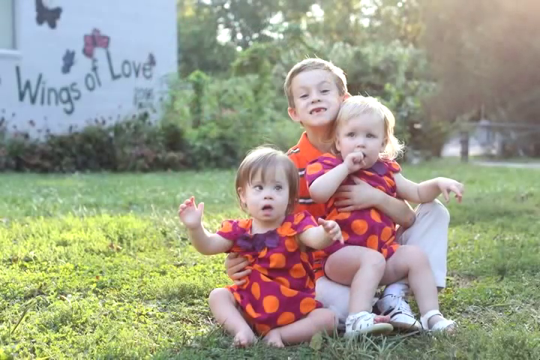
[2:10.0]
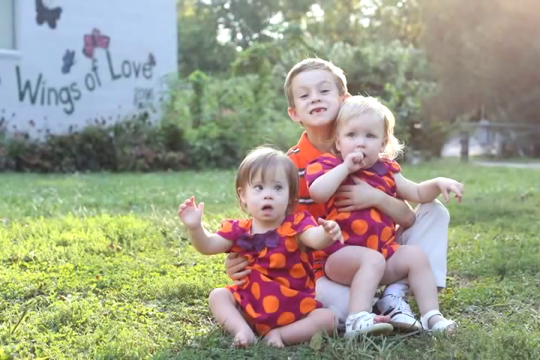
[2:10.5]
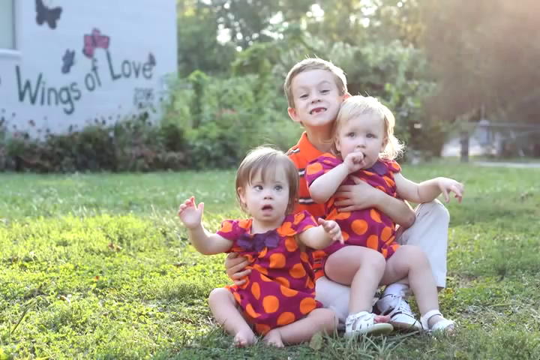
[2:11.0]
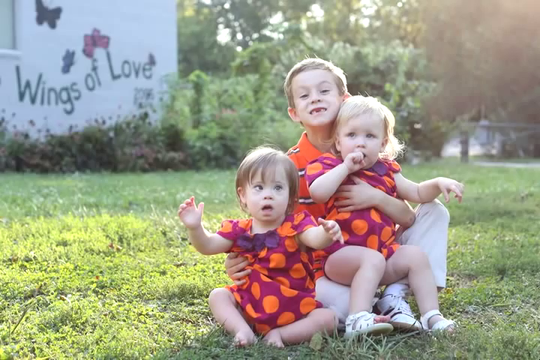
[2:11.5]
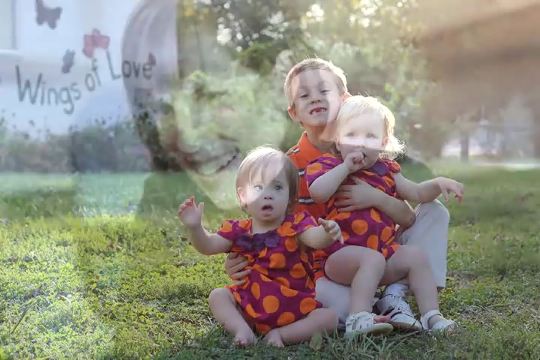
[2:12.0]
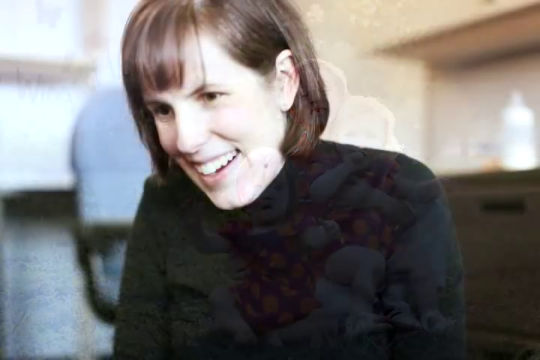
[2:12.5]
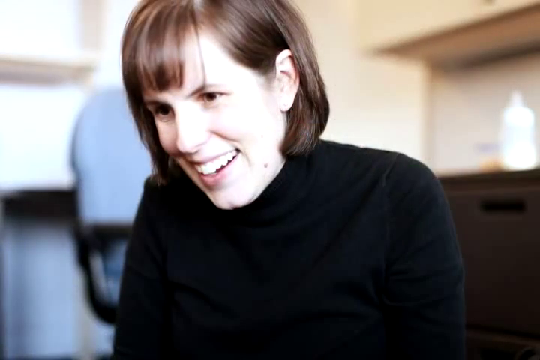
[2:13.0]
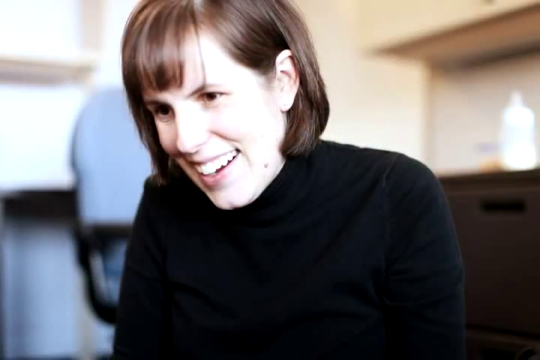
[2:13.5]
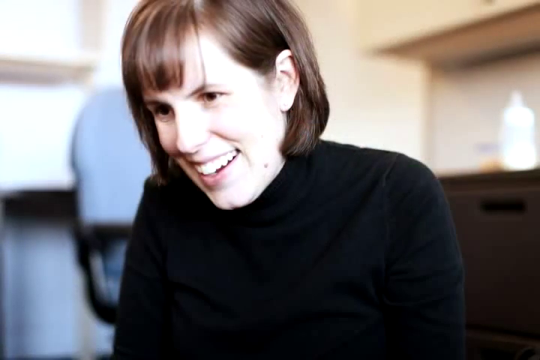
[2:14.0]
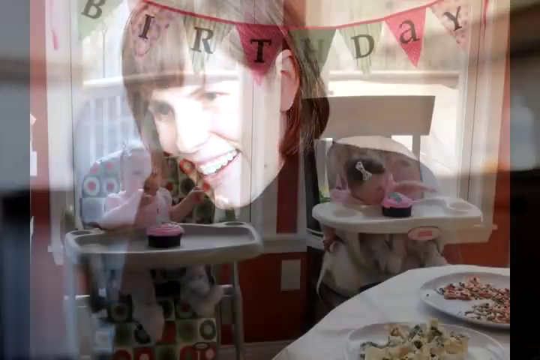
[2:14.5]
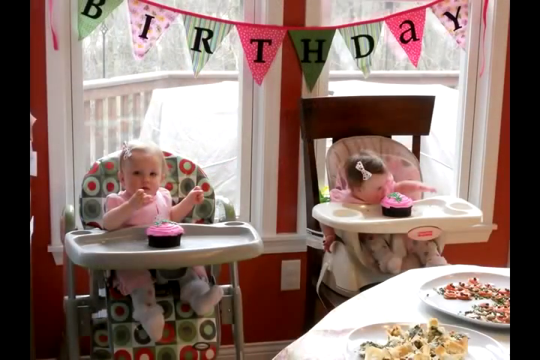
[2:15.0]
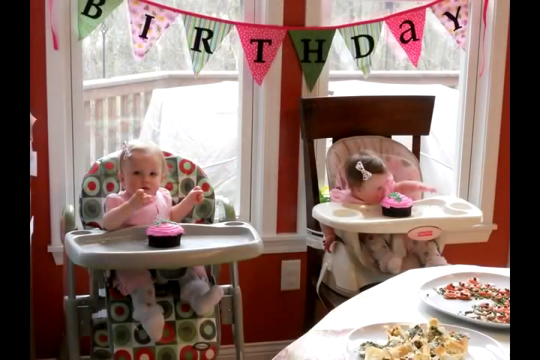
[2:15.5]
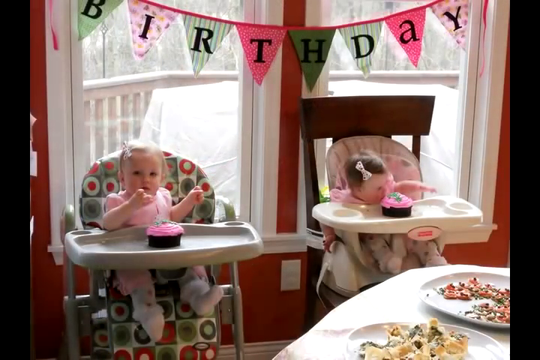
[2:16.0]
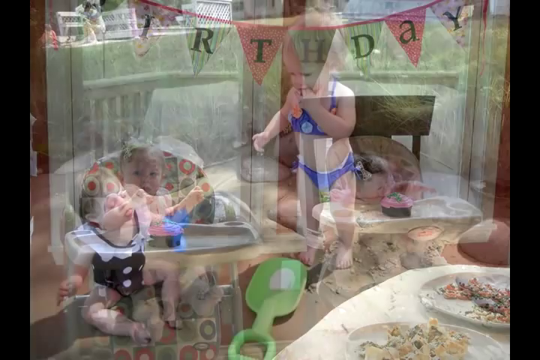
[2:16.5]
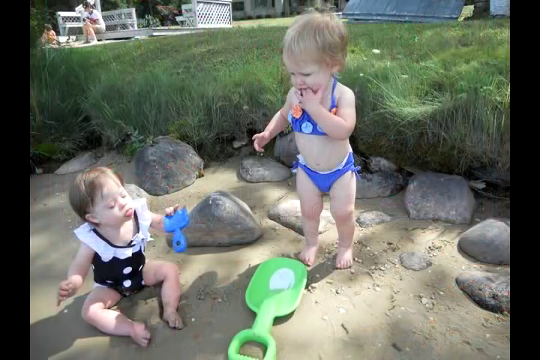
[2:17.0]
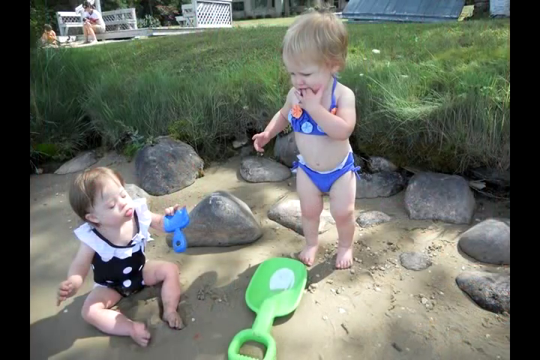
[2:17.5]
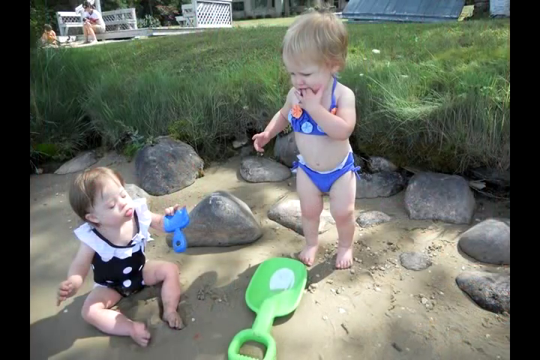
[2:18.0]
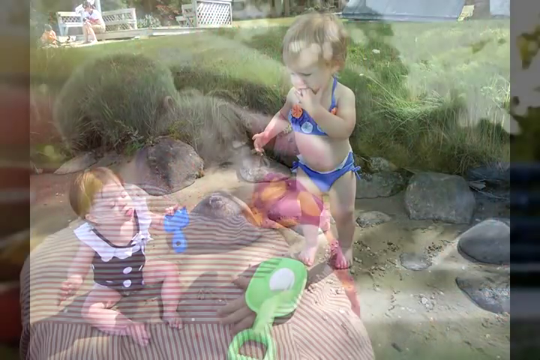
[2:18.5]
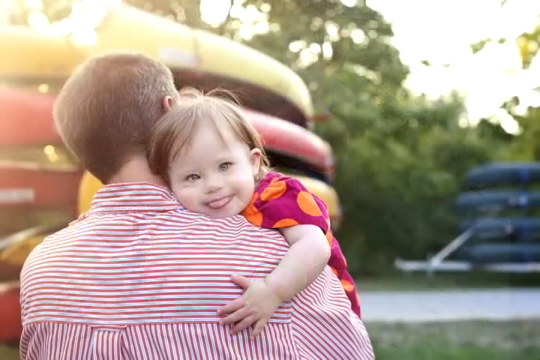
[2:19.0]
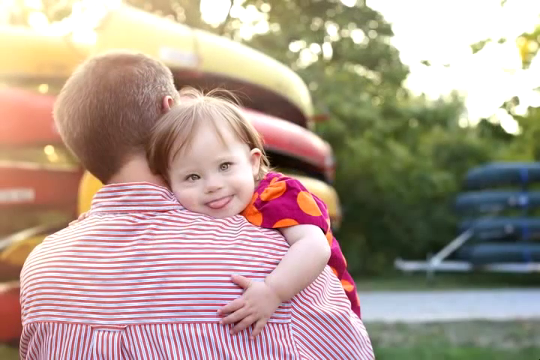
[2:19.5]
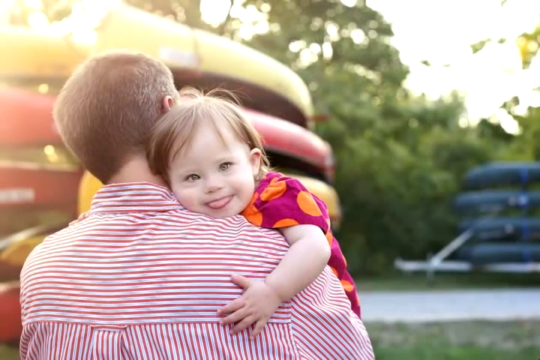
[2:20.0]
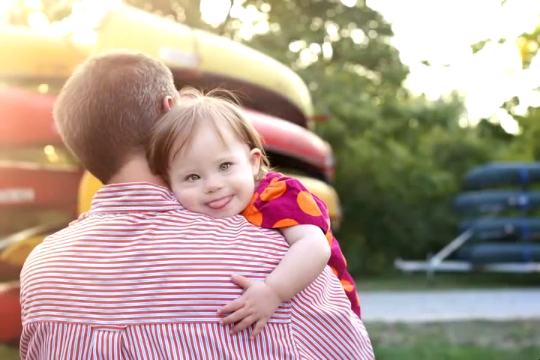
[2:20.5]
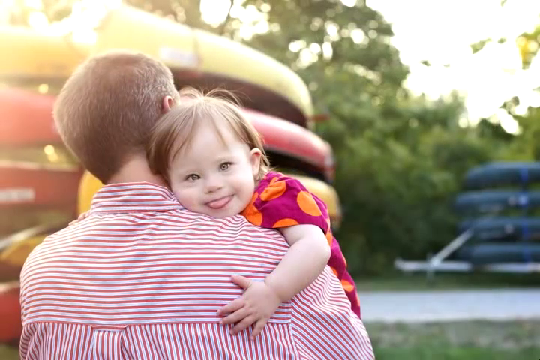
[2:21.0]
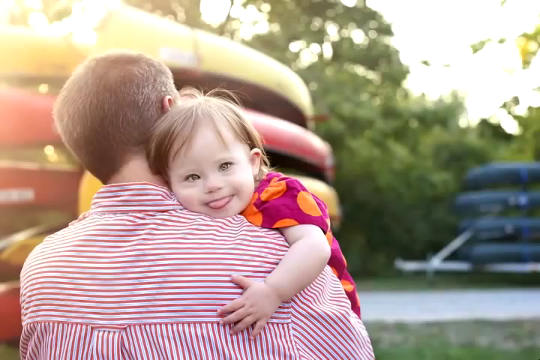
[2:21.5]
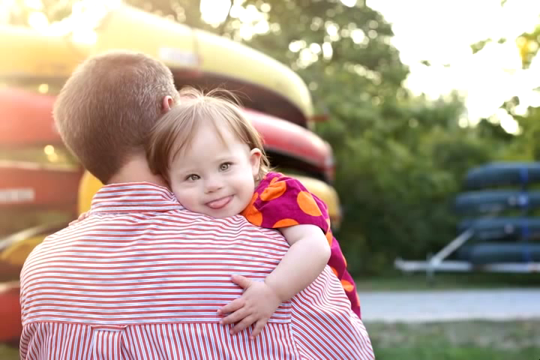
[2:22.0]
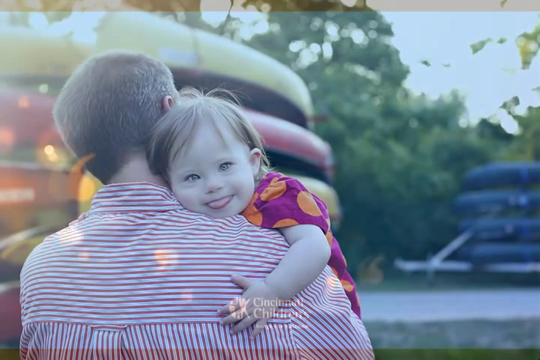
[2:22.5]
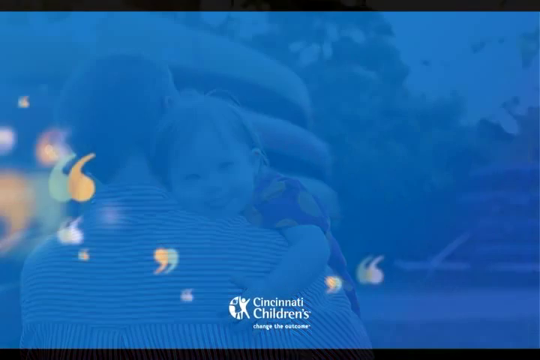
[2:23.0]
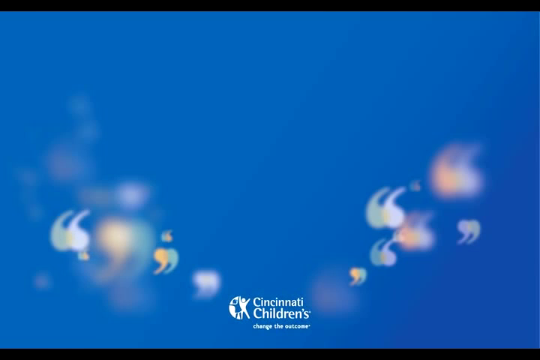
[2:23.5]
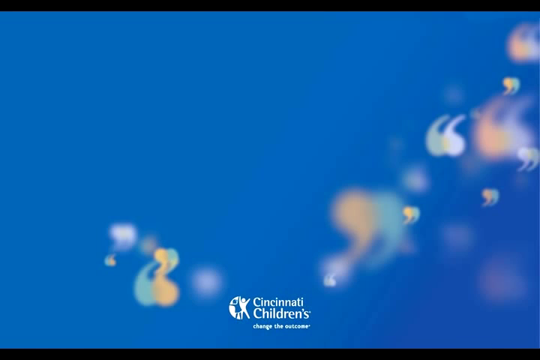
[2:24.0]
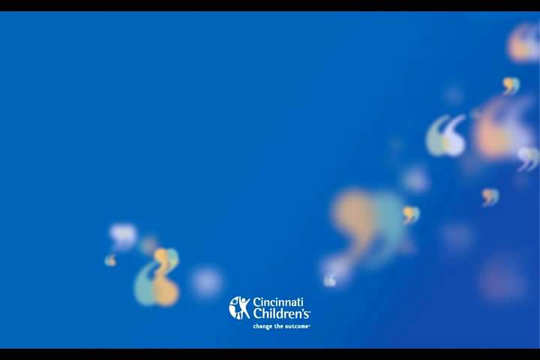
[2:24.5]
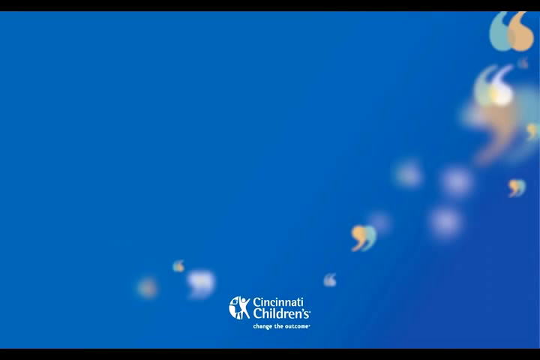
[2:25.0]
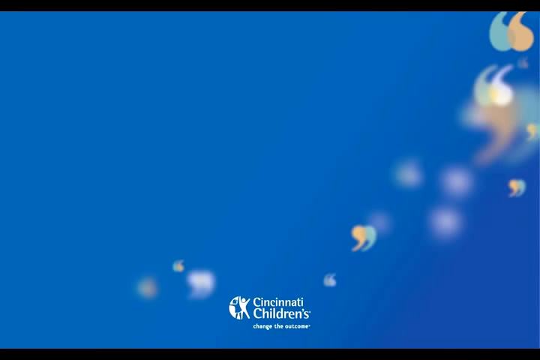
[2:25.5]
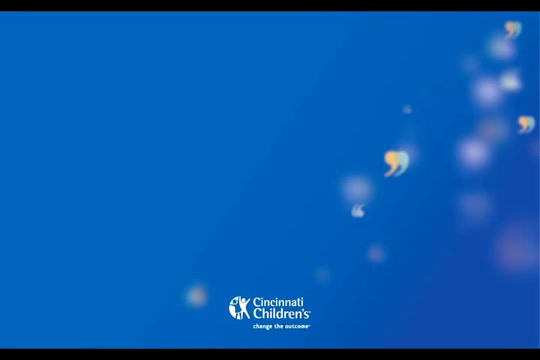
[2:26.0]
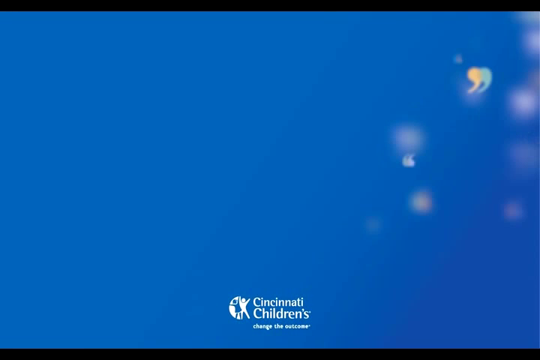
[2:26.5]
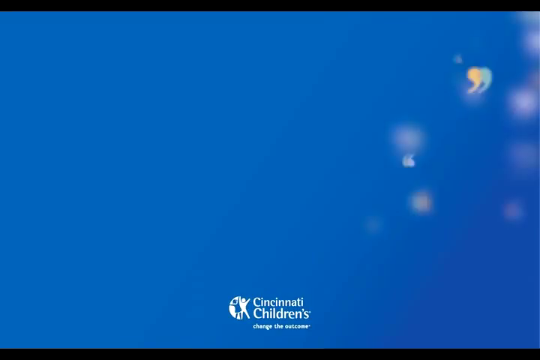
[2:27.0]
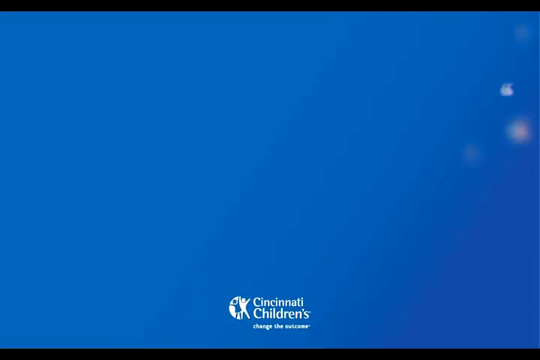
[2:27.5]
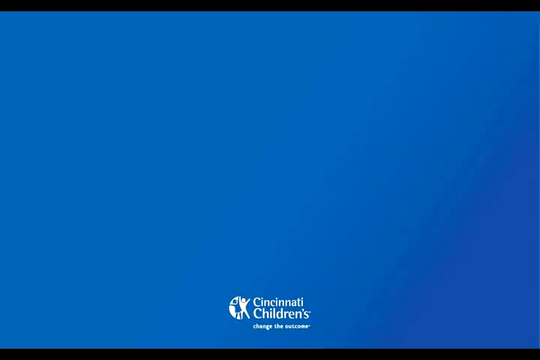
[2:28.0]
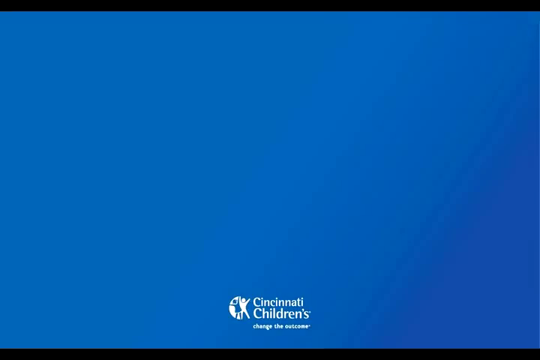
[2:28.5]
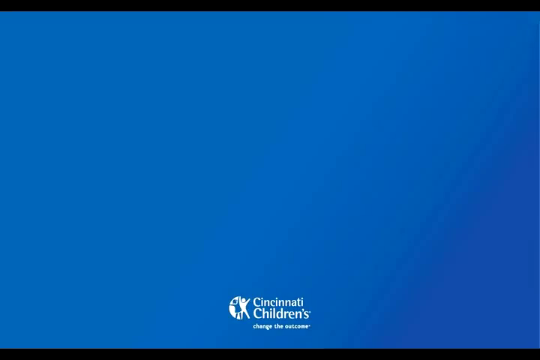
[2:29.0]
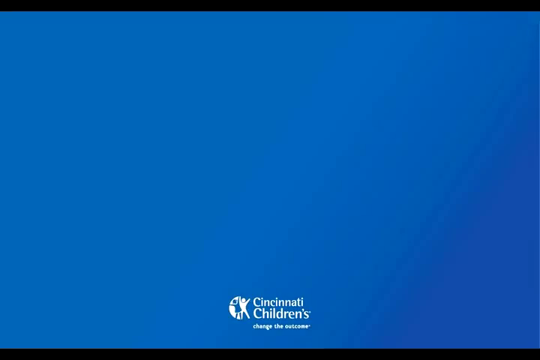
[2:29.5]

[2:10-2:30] The brother and the twins are outside, with butterflies on a wall behind them and the words "Wings of Love" underneath; the twins wear their orange polka dot dresses. A picture of just the mother follows. The next picture is apparently the twins' first birthday: they are in high chairs, each with a pink frosted cupcake with one candle in front of them, and a banner at the top reads "Birthday." The twins are then shown in bathing suits. Nora is shown lying on her dad's shoulder outside somewhere, with what looks like maybe some kind of playground equipment in the back. The video ends with the Cincinnati Children's logo on a blue screen background.